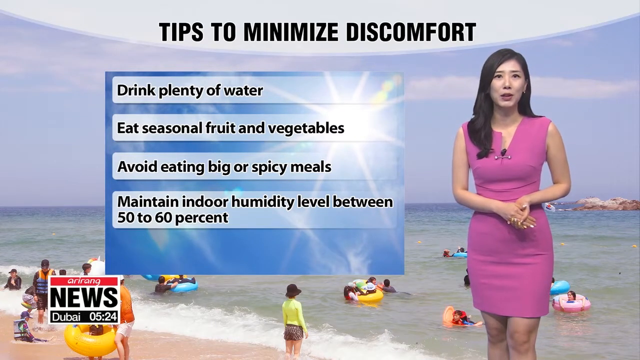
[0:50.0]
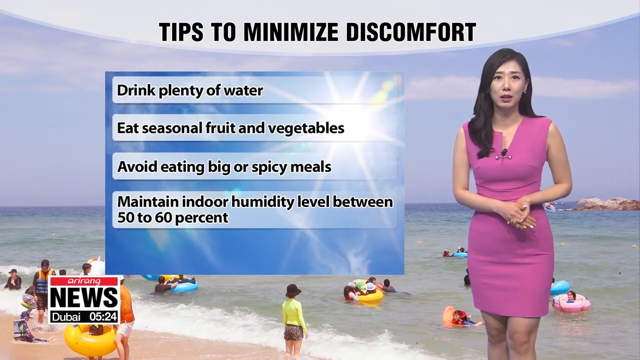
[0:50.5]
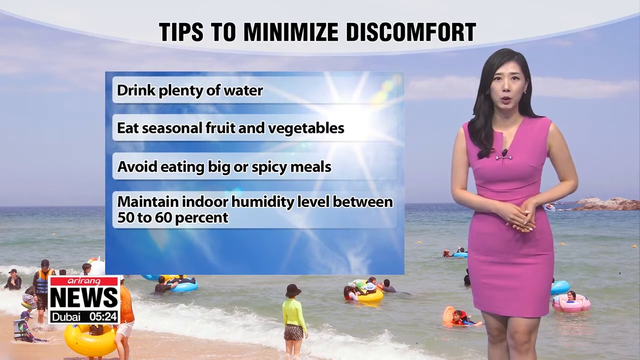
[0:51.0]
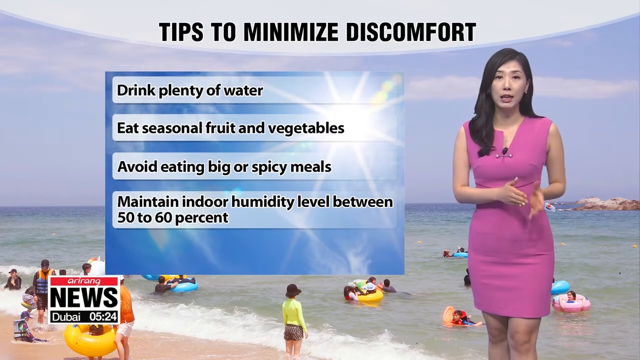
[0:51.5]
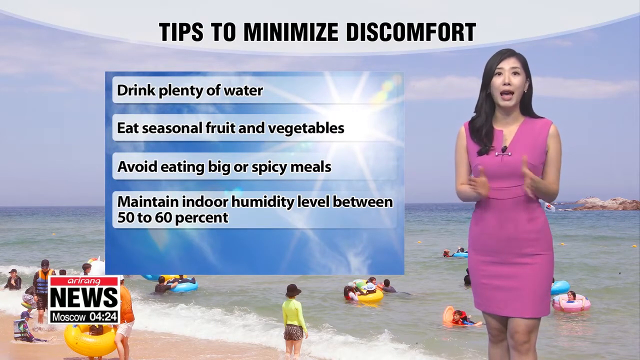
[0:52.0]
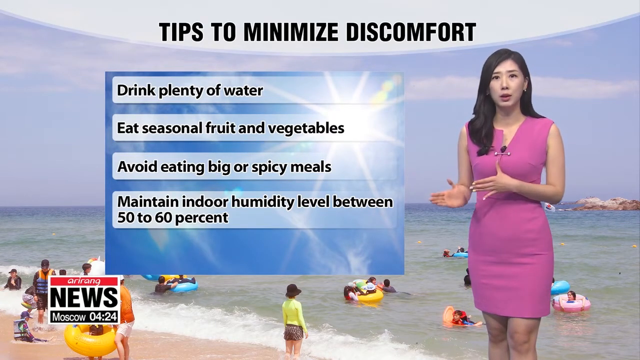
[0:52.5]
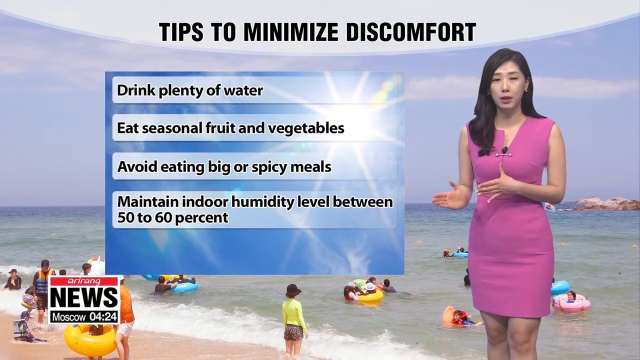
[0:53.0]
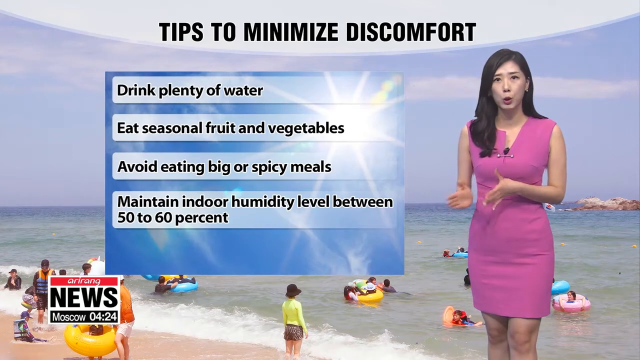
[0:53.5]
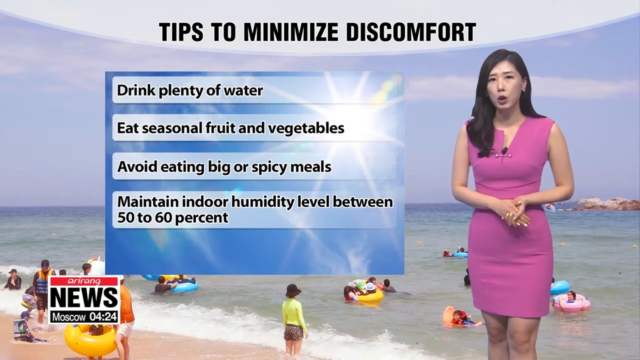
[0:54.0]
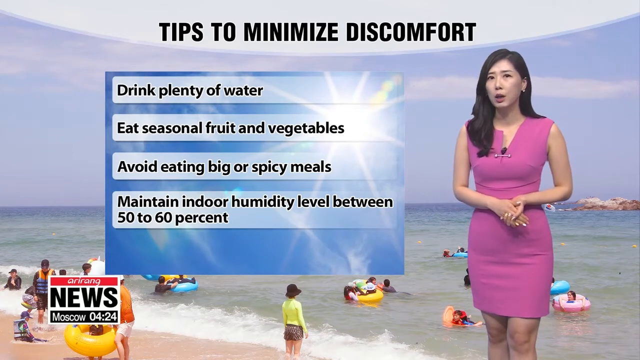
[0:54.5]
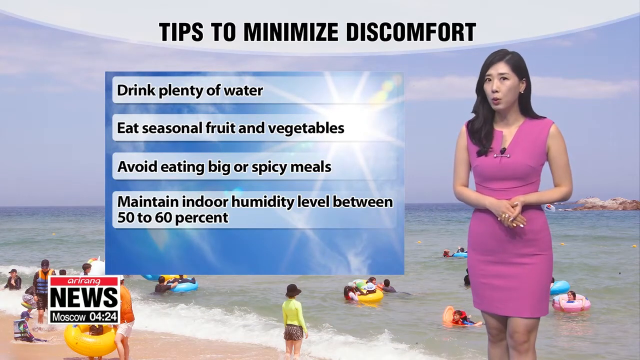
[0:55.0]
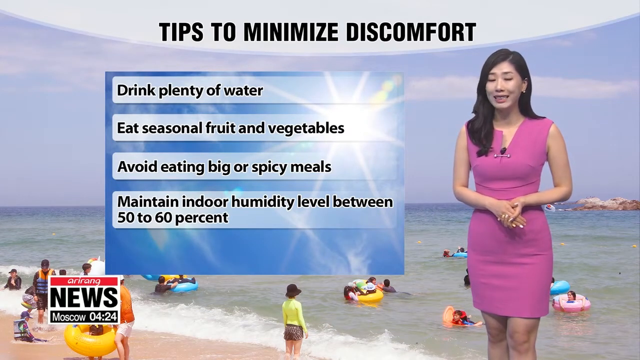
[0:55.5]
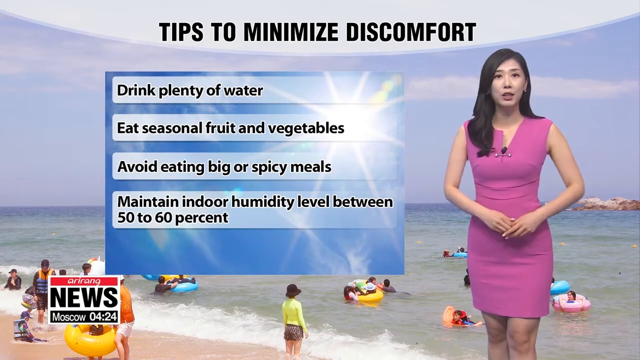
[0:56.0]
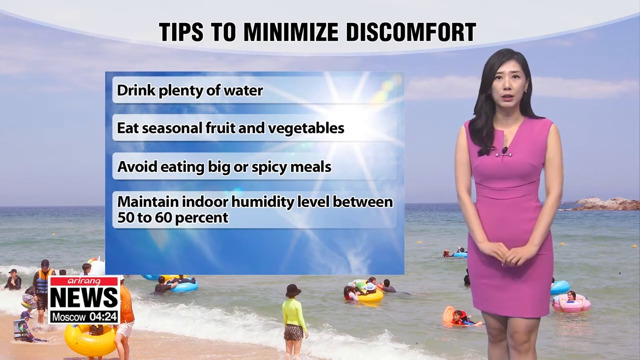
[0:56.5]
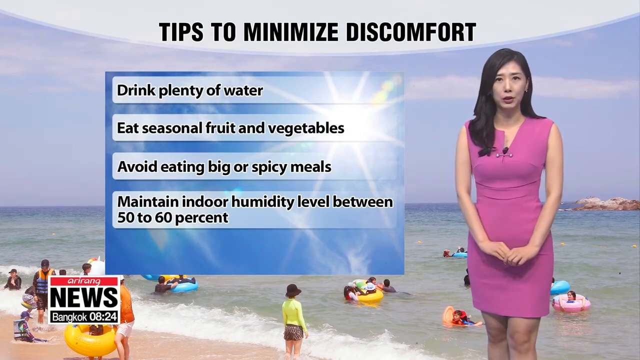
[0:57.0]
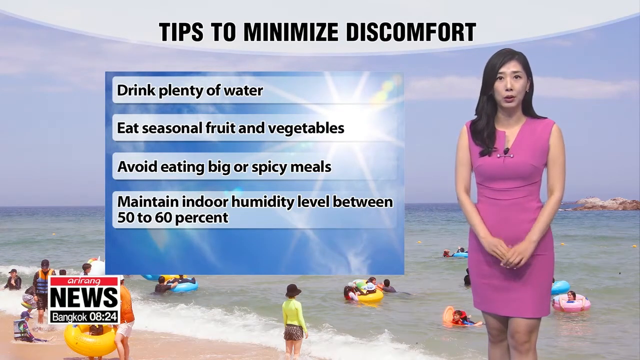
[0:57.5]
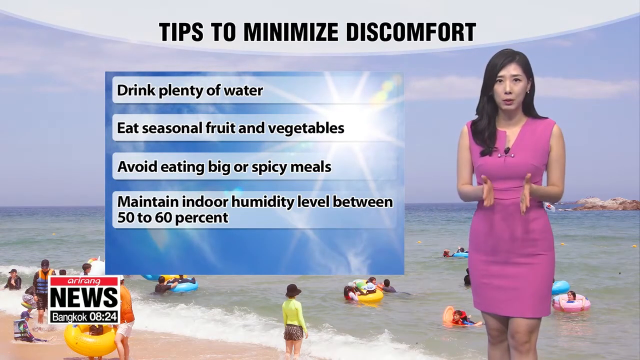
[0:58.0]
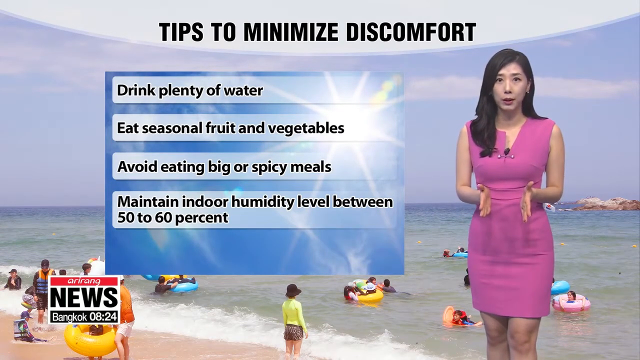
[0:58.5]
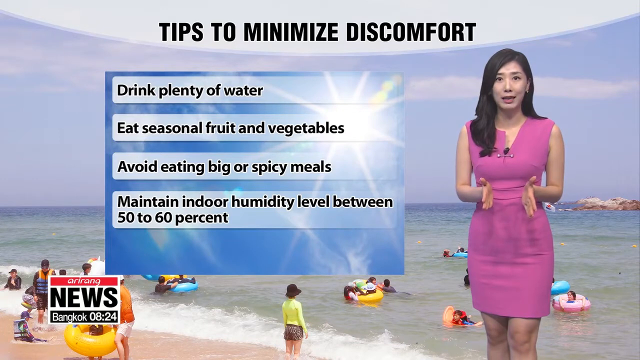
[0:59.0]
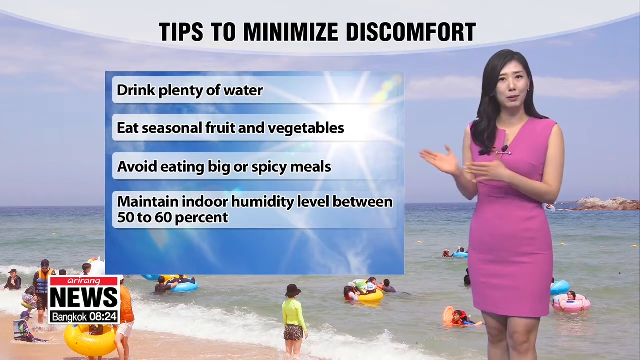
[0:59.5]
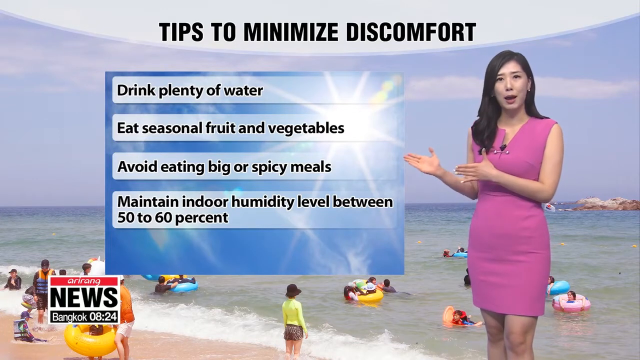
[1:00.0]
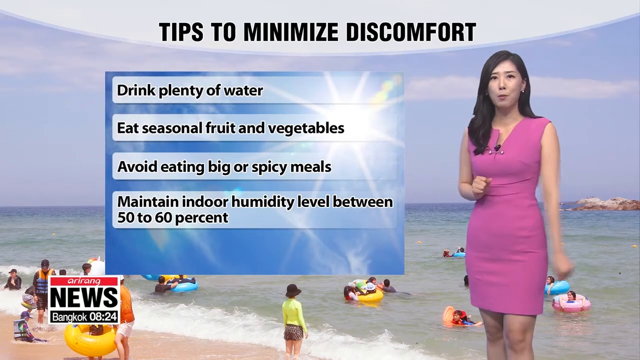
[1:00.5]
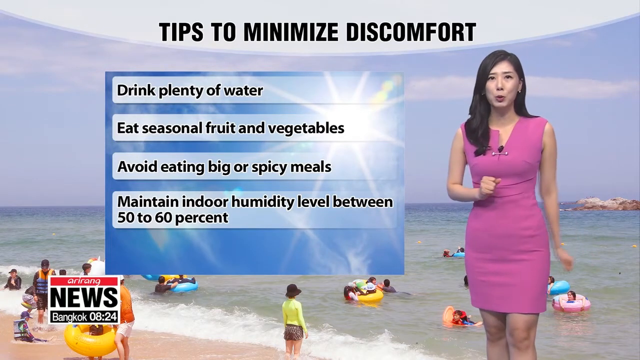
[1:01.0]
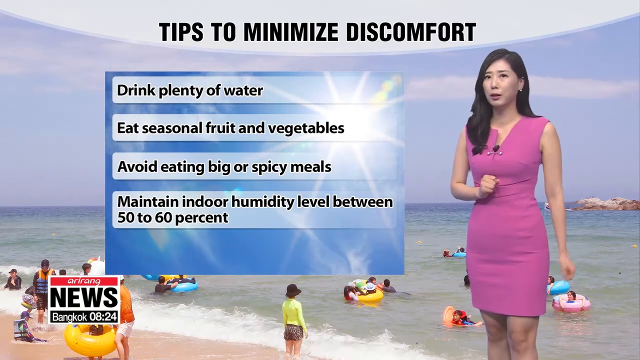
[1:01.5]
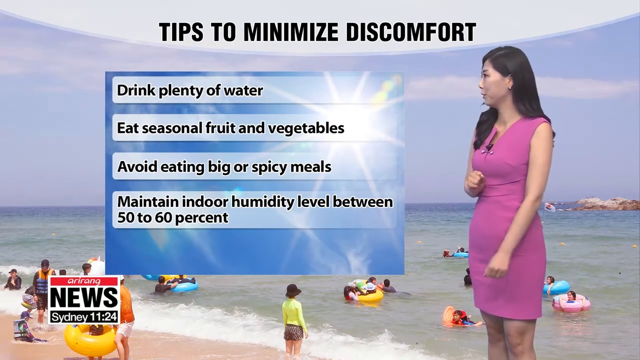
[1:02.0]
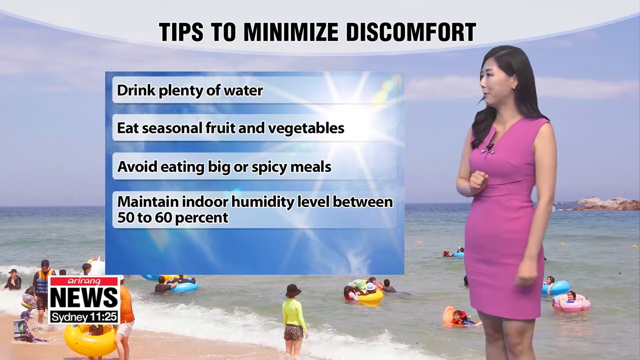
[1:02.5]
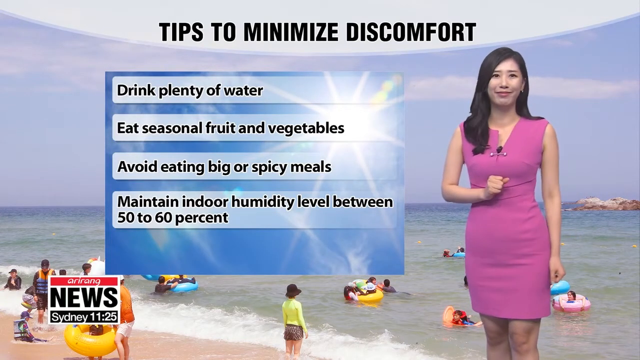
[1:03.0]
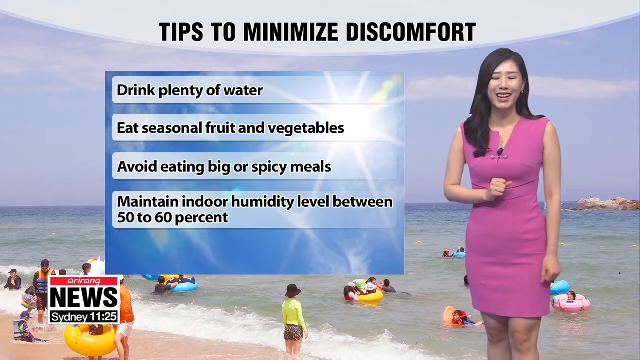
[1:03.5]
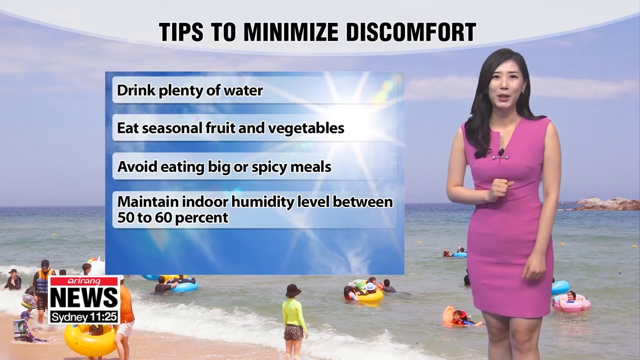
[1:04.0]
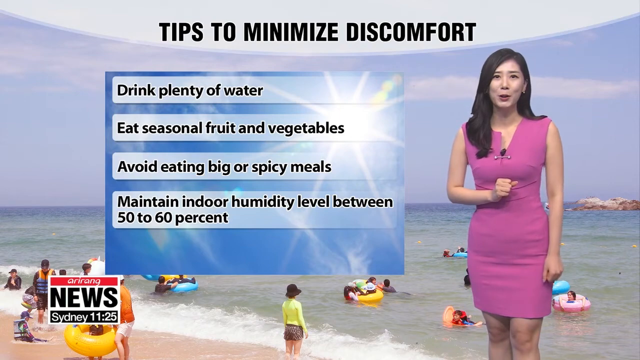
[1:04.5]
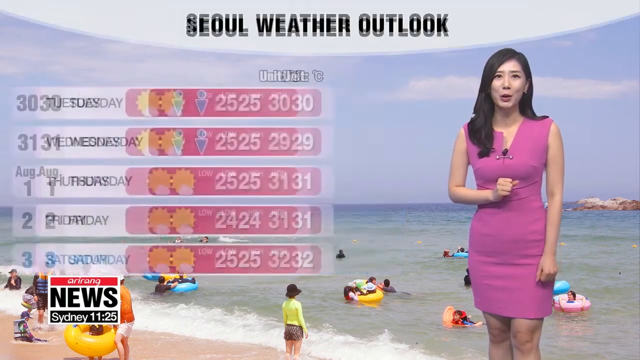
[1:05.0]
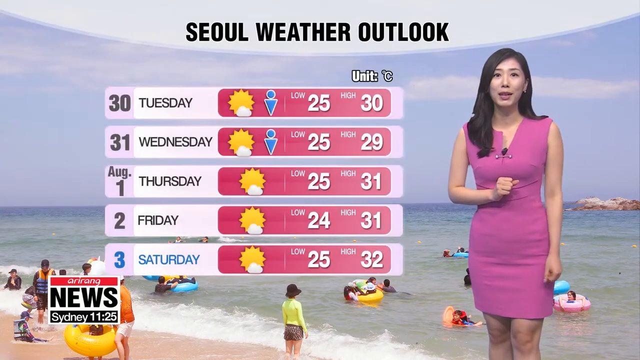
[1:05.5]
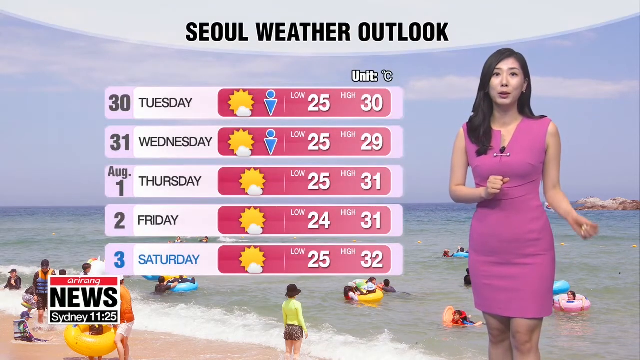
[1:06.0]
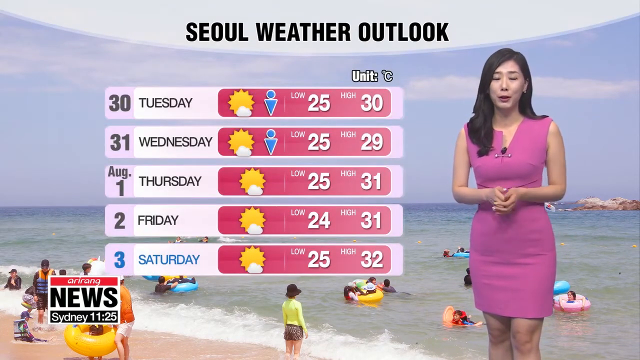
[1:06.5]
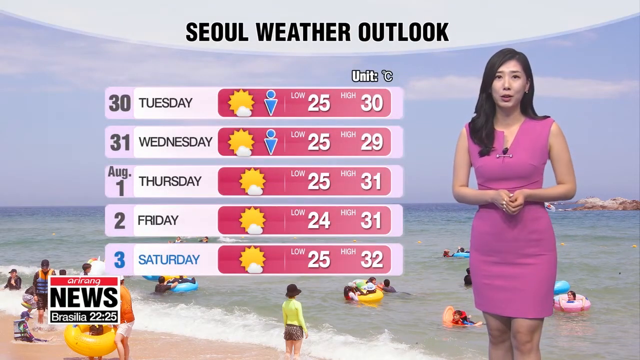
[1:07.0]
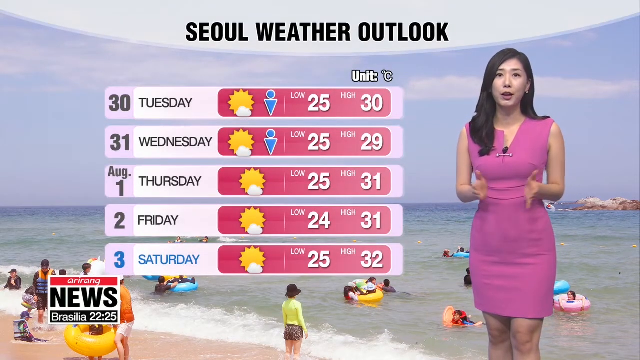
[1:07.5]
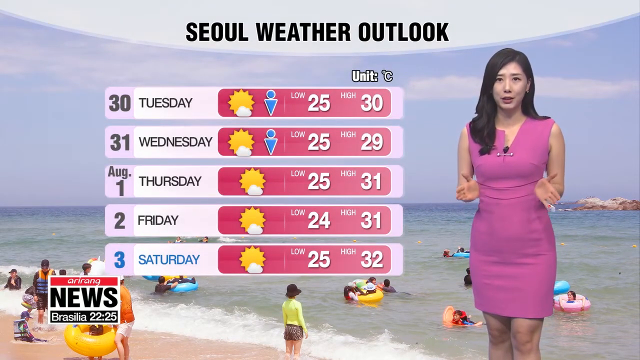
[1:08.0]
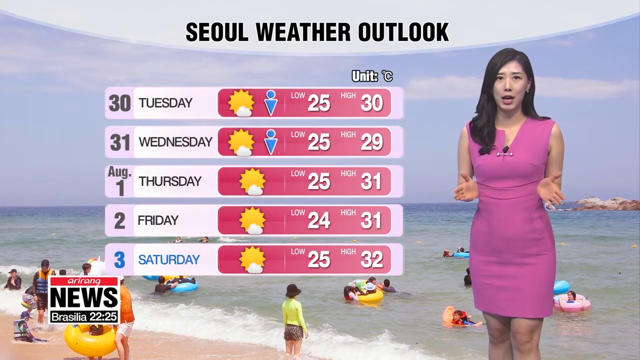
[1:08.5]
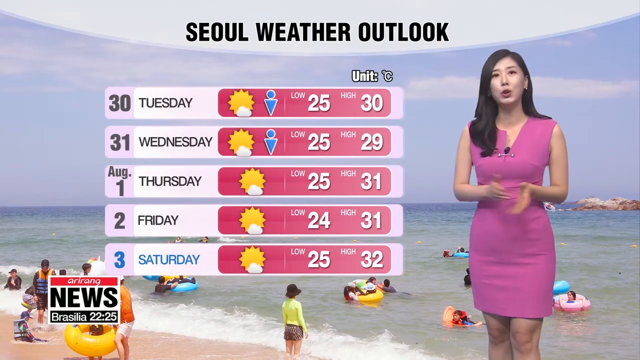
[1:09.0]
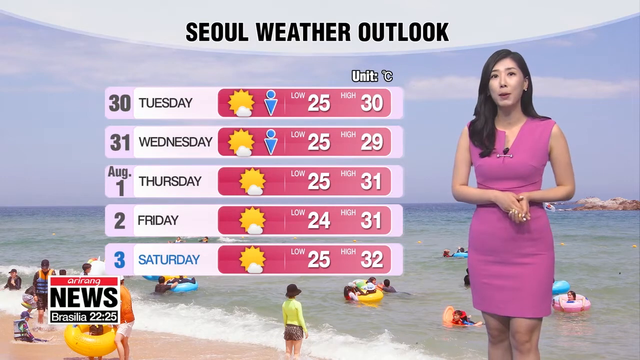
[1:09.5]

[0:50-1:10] A woman with long black hair wears a pink dress with a mic attached to it. She talks and actively waves her hands. The screen shows tips to minimize discomfort: first, drink plenty of water; second, eat seasonal fruits and vegetables; third, avoid big or spicy meals; fourth, maintain an indoor humidity level between 50 to 60%. A news logo in the bottom left of the screen identifies this as a news channel. In the background, people are swimming in the ocean. The woman appears to be pointing at the screen with her right hand. Then the screen displays "Seoul weather outlook," covering Tuesday to Saturday with a different temperature for each day, including different highs and lows.